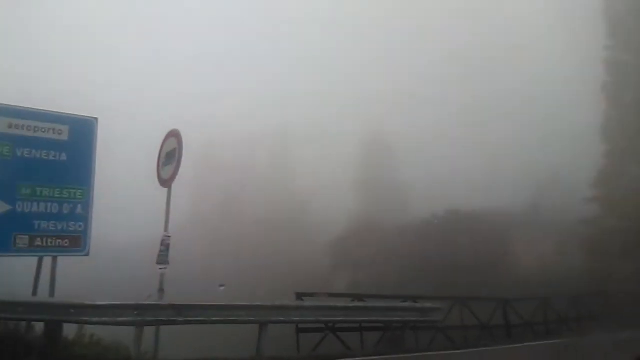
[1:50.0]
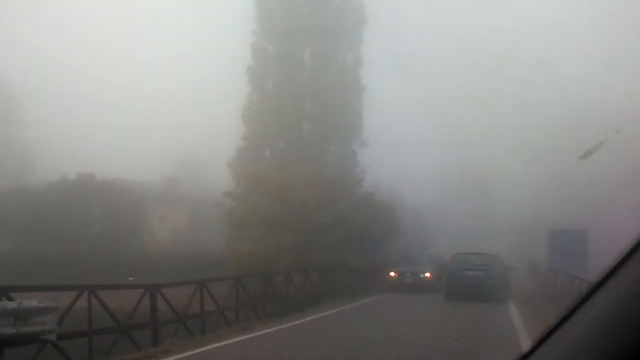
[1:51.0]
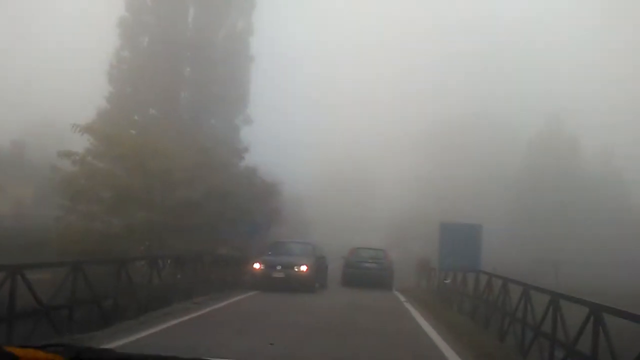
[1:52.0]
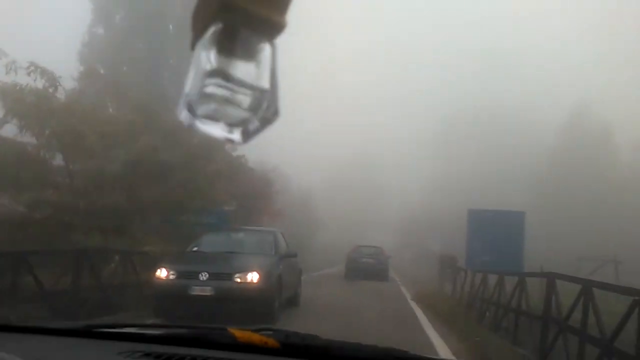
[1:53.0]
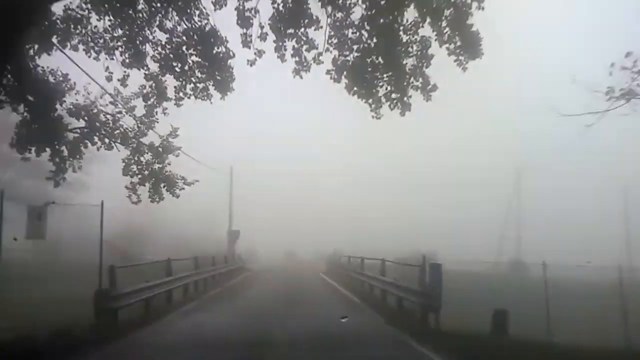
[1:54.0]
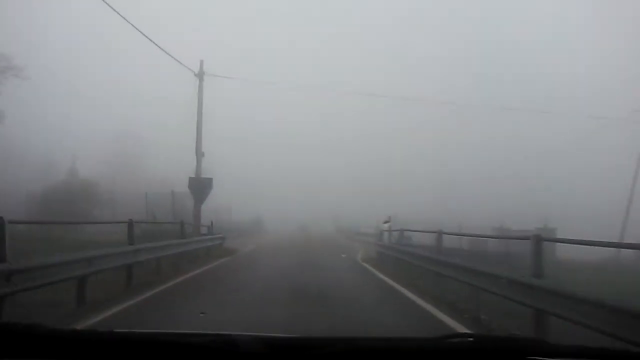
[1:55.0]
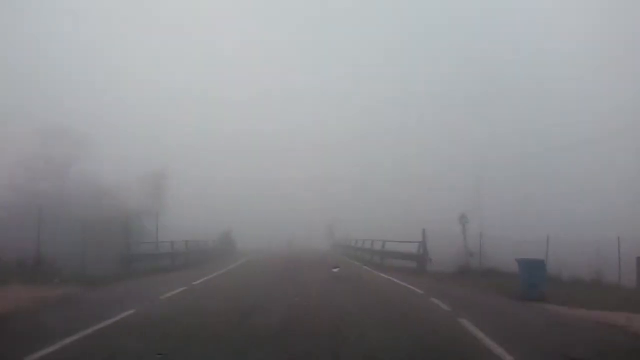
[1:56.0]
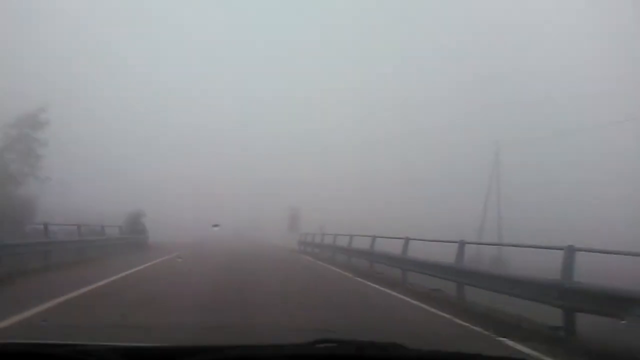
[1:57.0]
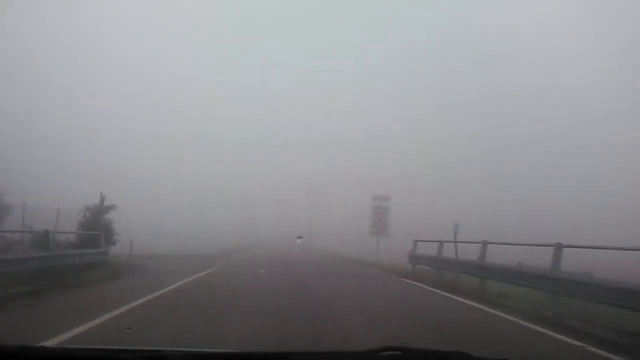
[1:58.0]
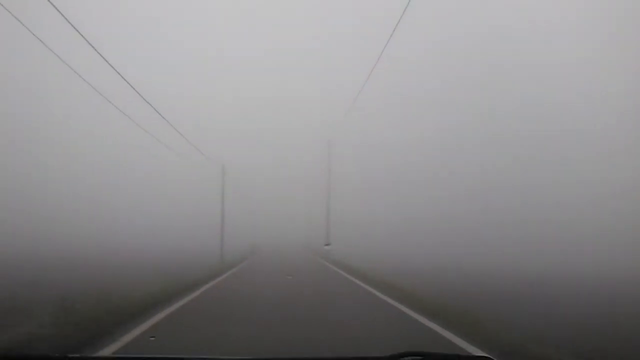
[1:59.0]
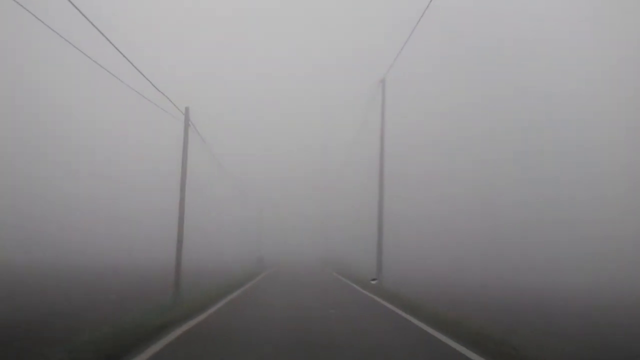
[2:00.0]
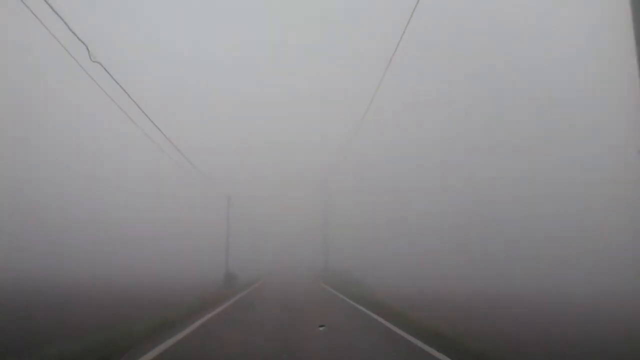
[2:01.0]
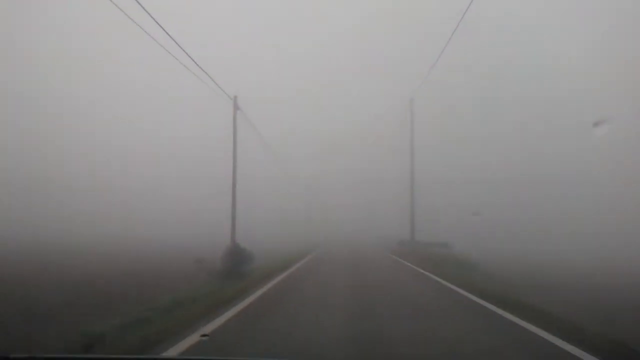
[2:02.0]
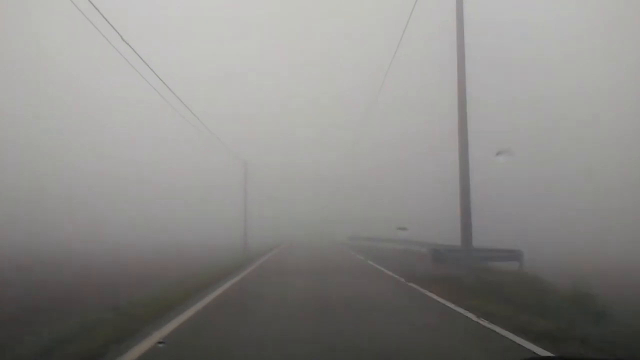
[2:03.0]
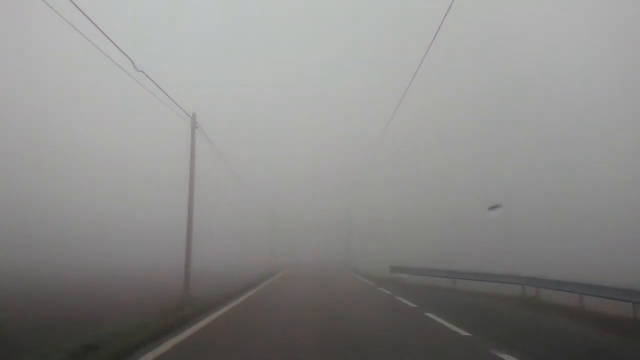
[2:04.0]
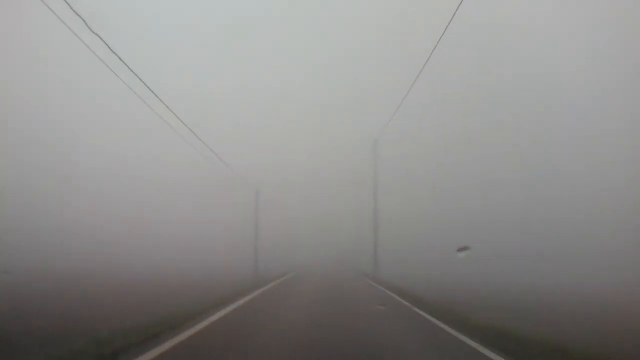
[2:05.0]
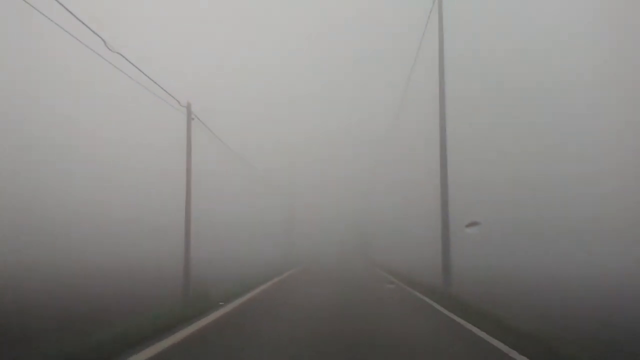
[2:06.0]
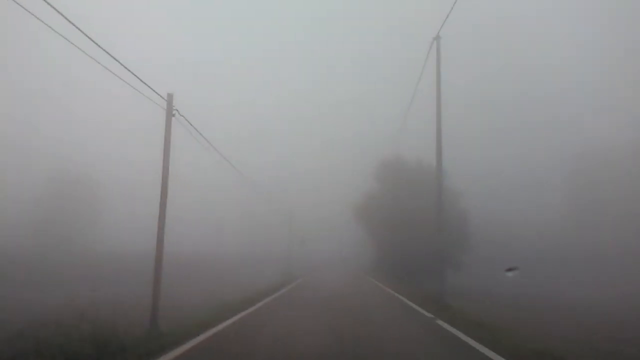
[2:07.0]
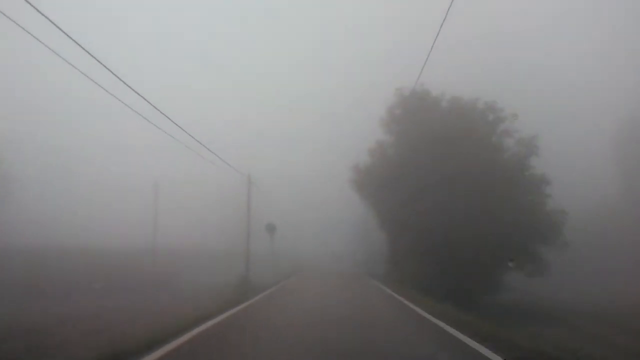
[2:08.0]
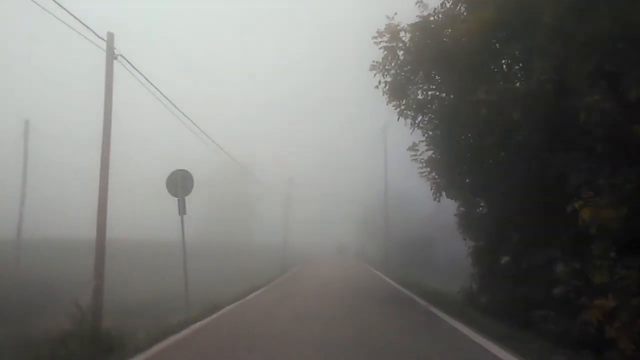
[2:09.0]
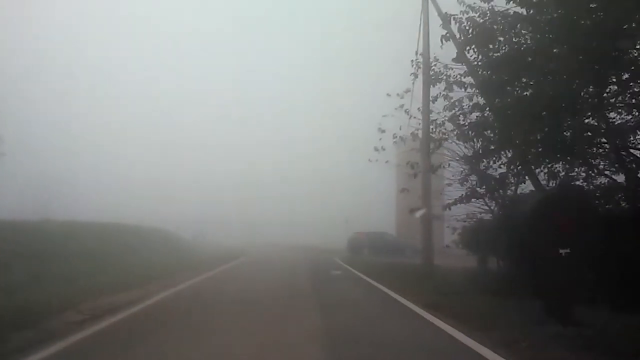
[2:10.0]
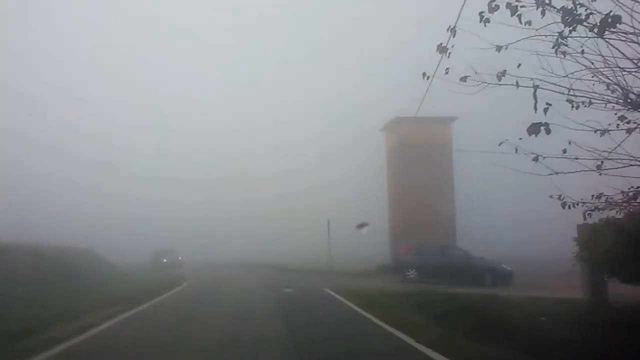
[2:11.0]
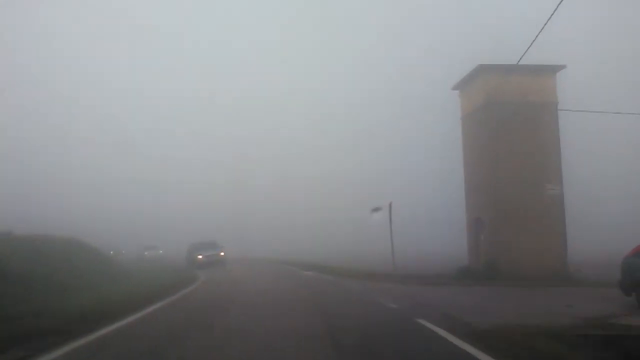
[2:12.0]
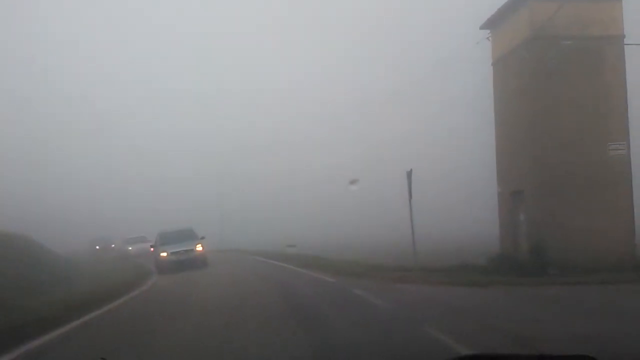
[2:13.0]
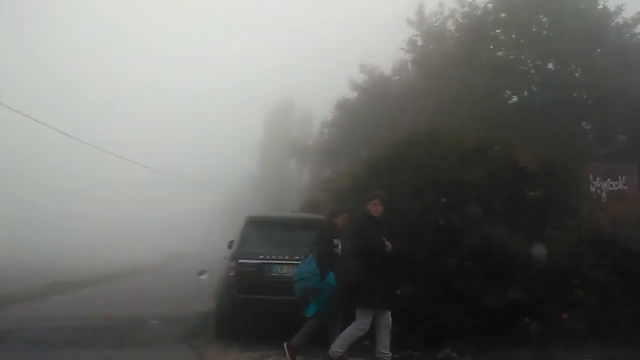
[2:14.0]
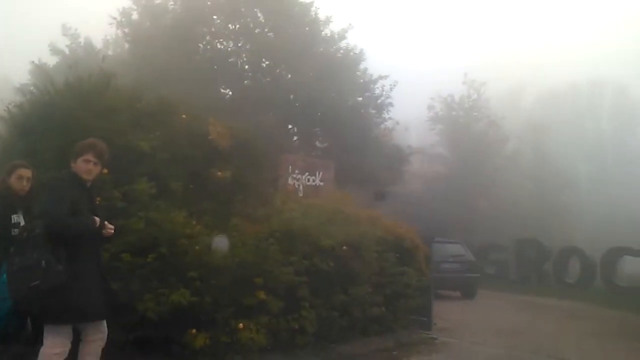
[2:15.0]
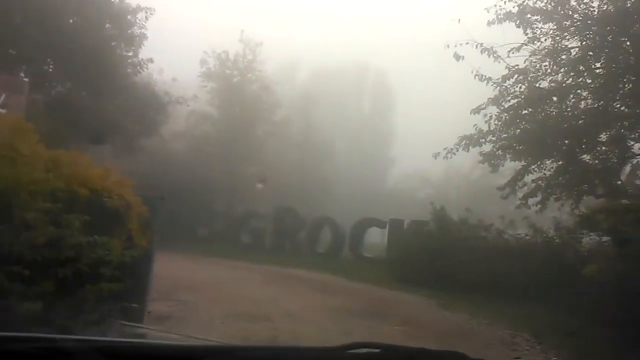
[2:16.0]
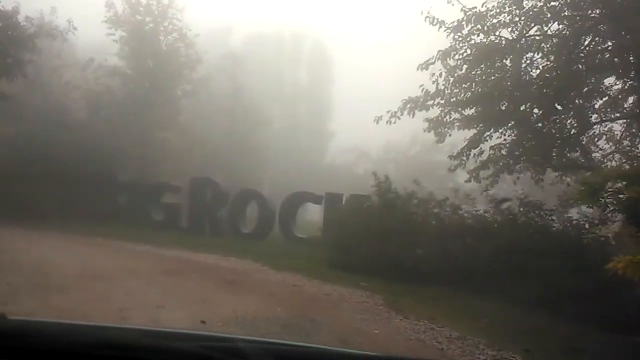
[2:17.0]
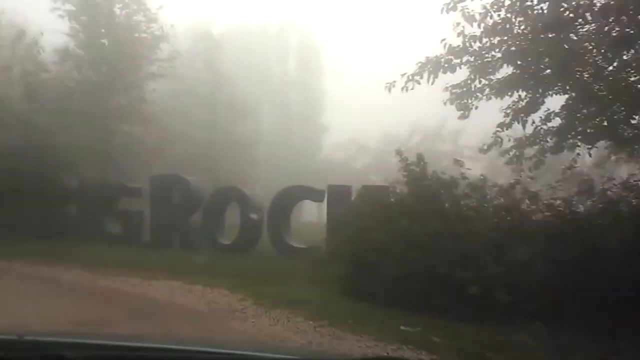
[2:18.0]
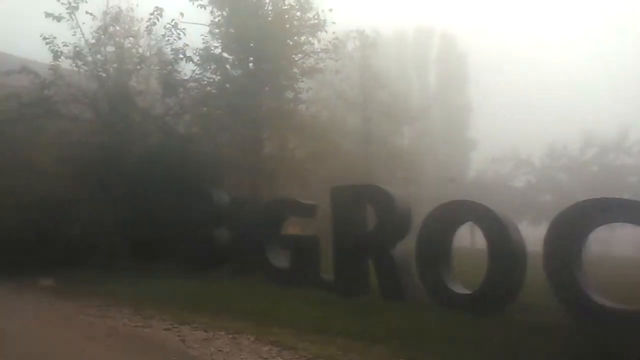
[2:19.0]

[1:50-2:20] The outdoors is filmed from inside a vehicle, and the camera frame shakes, probably from the vehicle's vibration. There is a lot of fog, and raindrops are on the windshield. The road appears to be a two-way street of paved asphalt with white lines. The area appears to be rural, with a lot of farmland and a lot of really tall light poles or utility poles. The fog makes detail hard to see, but trees go by and other cars are turning. A Range Rover is parked on the side of the road, and as the vehicle approaches it, two young people, probably in their 20s, wearing pants and a jacket, both turn to the right and stare at the approaching vehicle. The vehicle then turns off and pulls into a driveway, where there is a sign suggesting maybe some kind of hotel or hostel. It is very foggy outside with very low light.